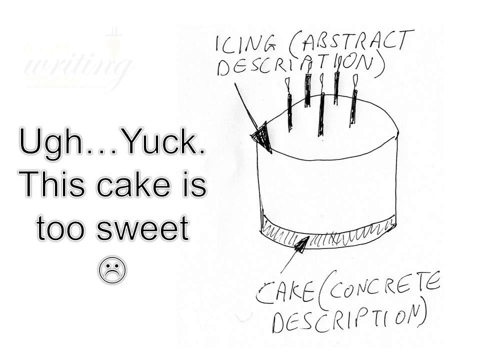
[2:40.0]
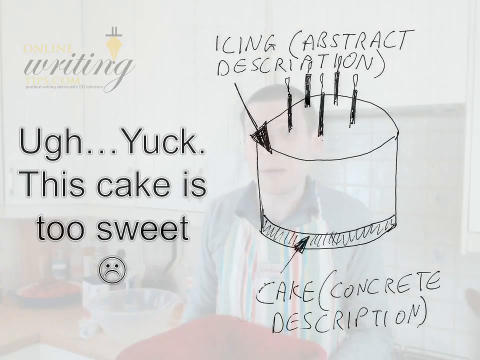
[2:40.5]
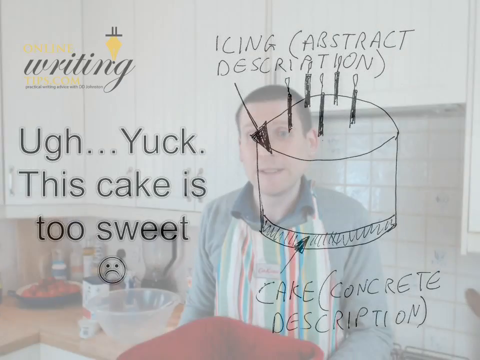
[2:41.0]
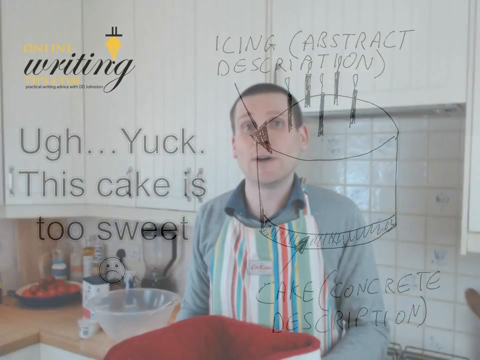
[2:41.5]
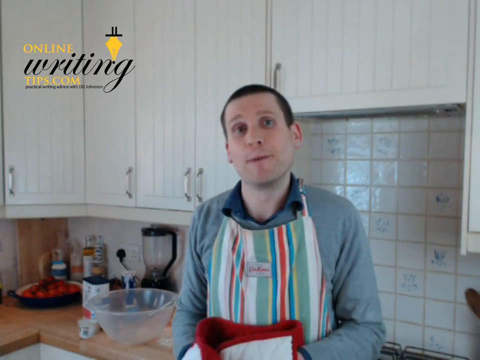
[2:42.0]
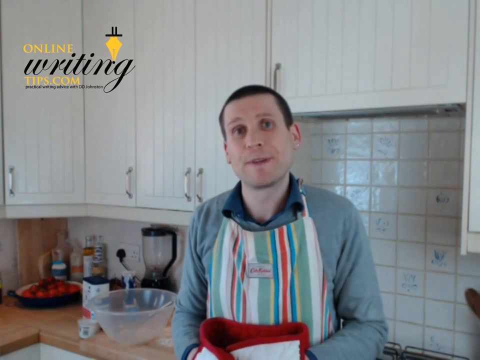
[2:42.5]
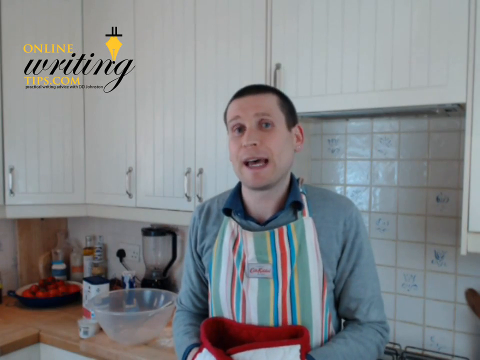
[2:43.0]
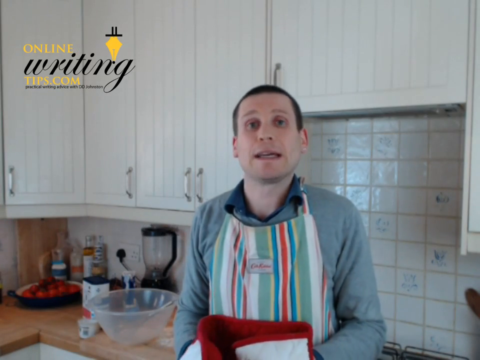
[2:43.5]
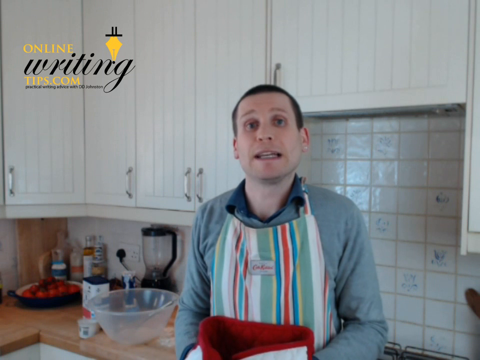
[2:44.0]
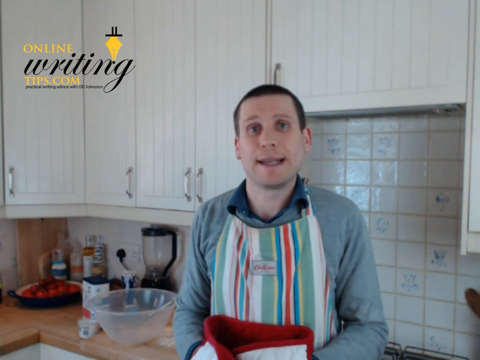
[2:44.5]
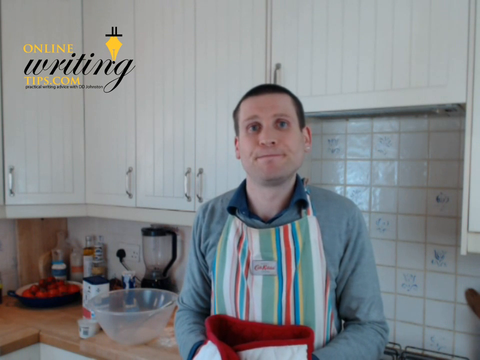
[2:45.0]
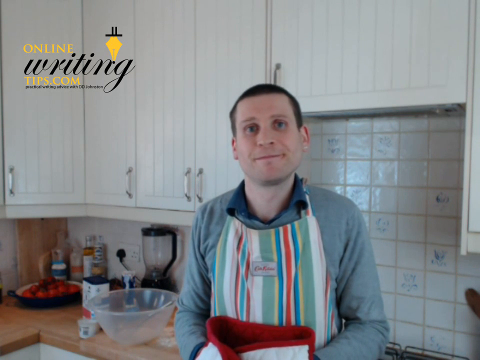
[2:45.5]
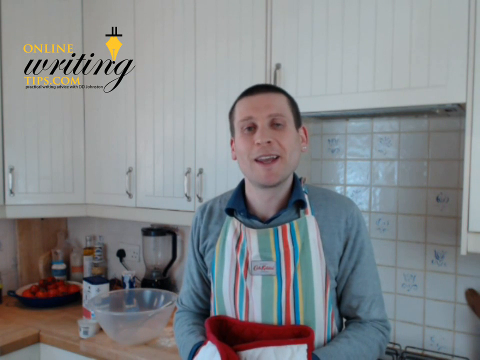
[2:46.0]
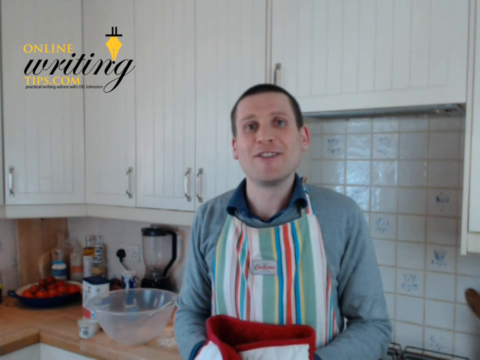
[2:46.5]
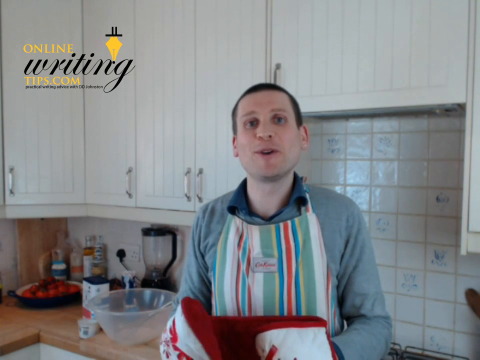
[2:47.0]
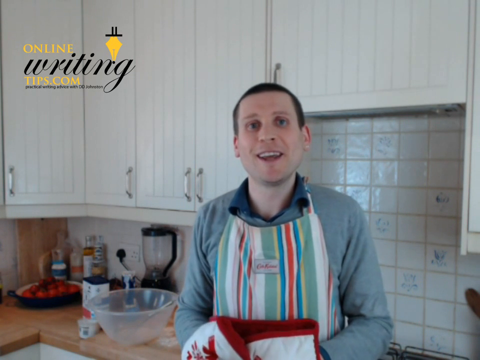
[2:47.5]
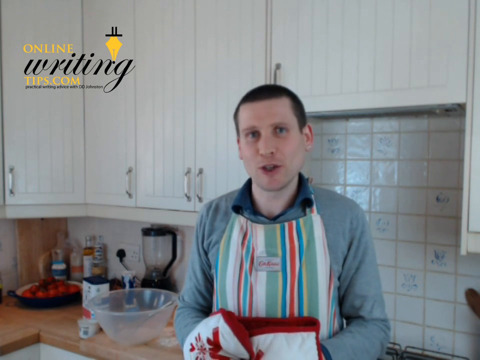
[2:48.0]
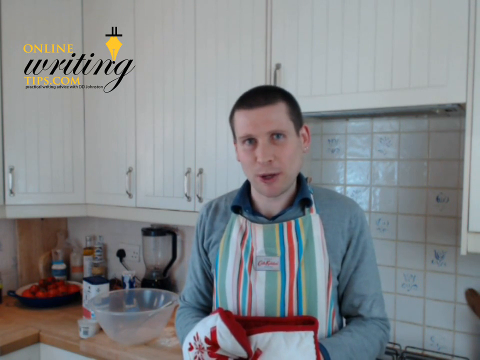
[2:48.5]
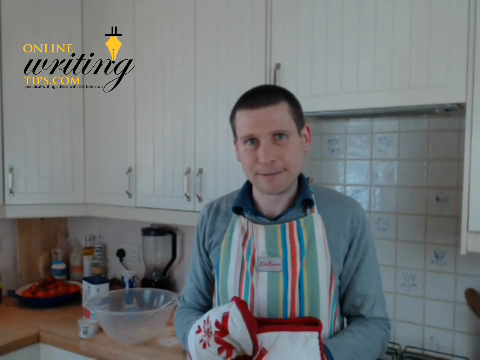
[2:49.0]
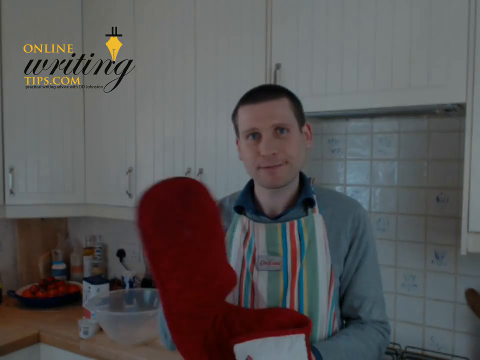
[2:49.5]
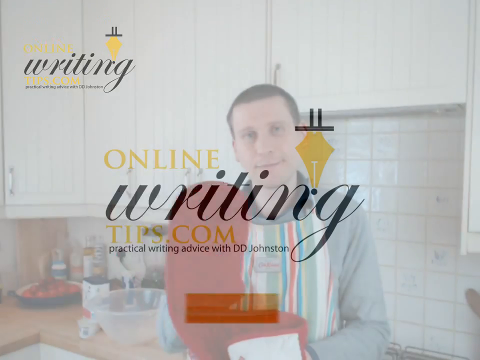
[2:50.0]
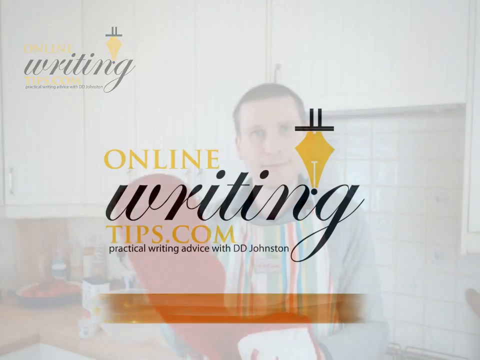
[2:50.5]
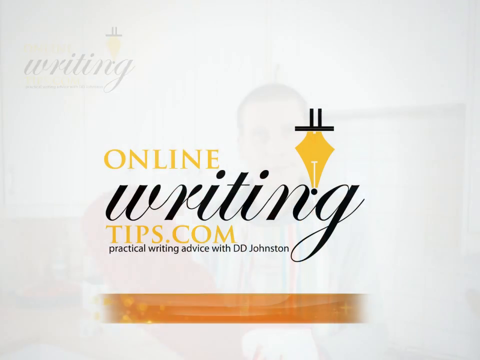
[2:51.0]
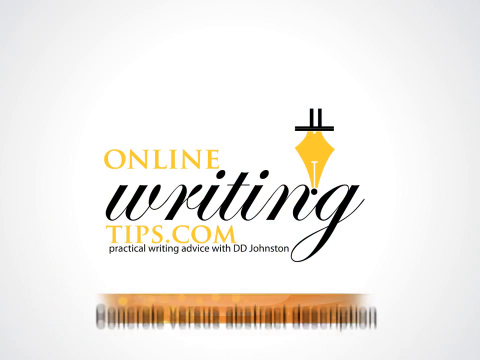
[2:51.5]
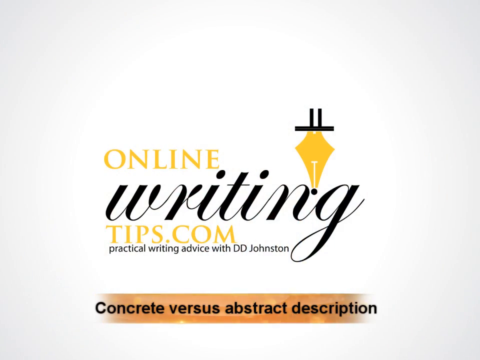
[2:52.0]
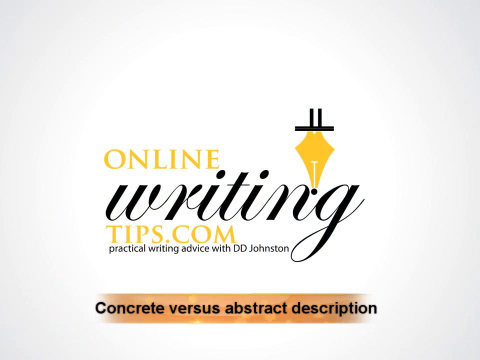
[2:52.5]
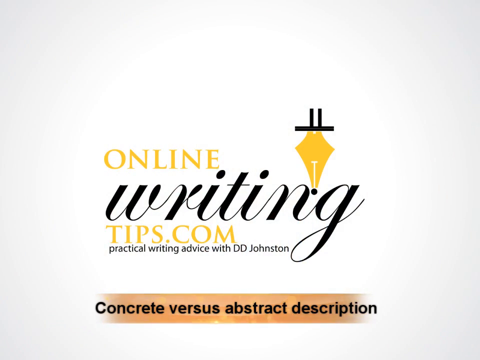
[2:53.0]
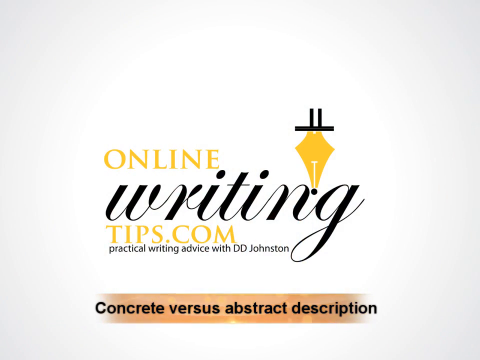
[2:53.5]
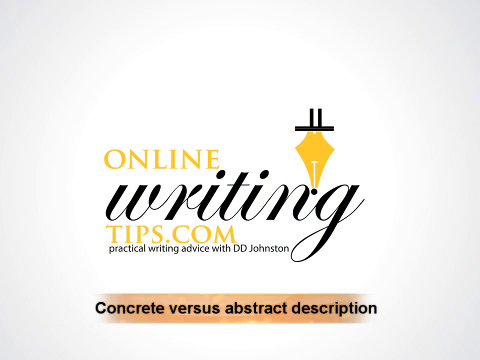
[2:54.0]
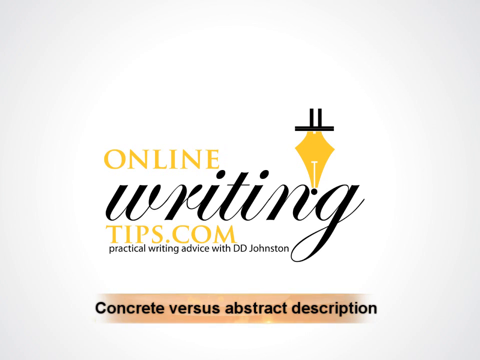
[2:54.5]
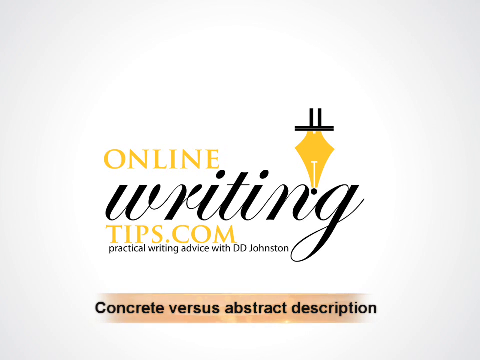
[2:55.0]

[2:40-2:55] A man in a kitchen wears a gray shirt, a multicolored striped apron and red oven mitts, speaking to the camera with very animated hands. He seems very excited and has a lot to say. A logo in the top left corner says "OnlineWritingTips.com" with an old-style pen above it. He waves goodbye to the camera, and the scene changes to the logo alone, bigger, on a white background. It says "OnlineWritingTips.com" with an old-style pen; "Online" and "tips.com" are yellow, and "Writing" is black cursive. Underneath it says "Practical Writing Advice with D.D. Johnson". Below that is a line with an orange background that says "Concrete vs. Abstract Description". The orange background behind the words moves and flows with little particles toward the right of the screen.